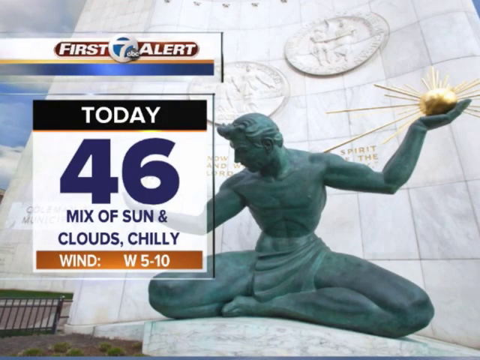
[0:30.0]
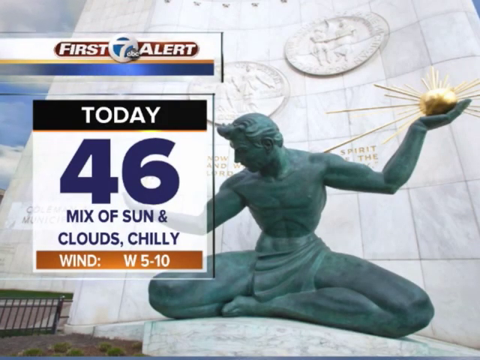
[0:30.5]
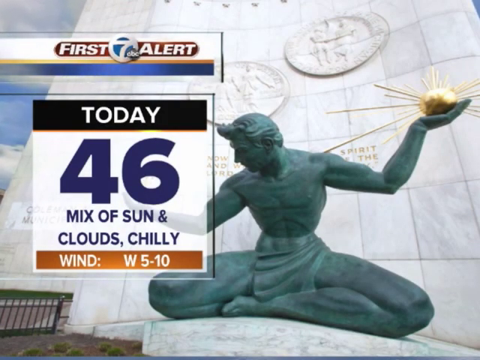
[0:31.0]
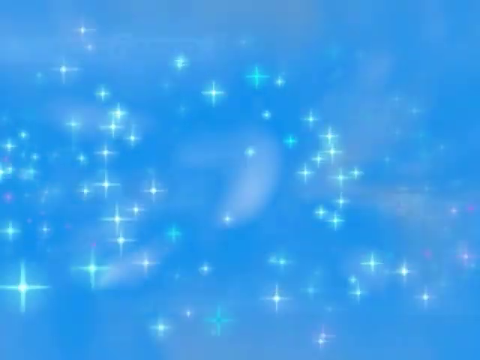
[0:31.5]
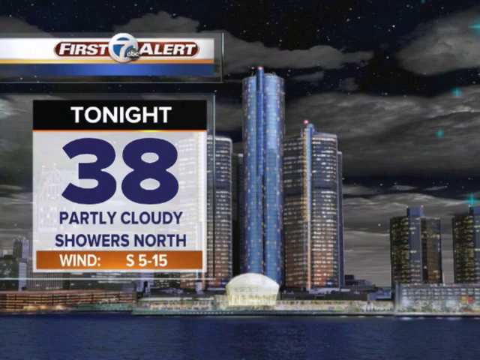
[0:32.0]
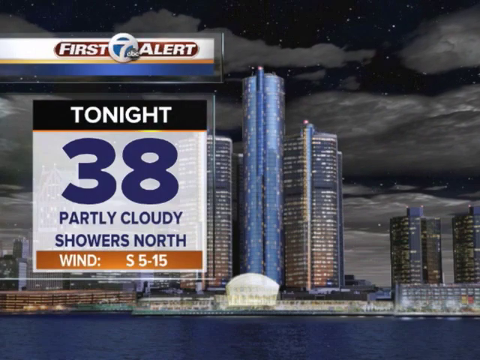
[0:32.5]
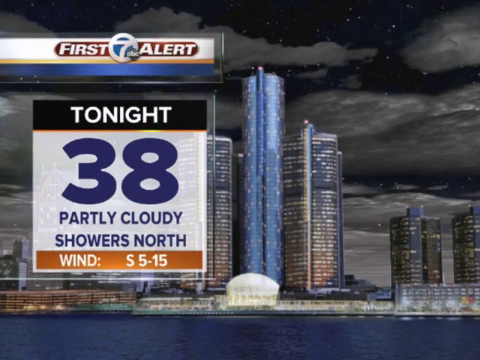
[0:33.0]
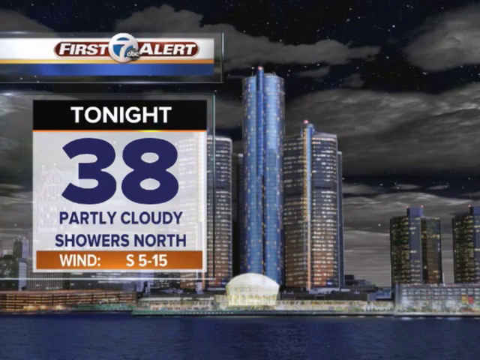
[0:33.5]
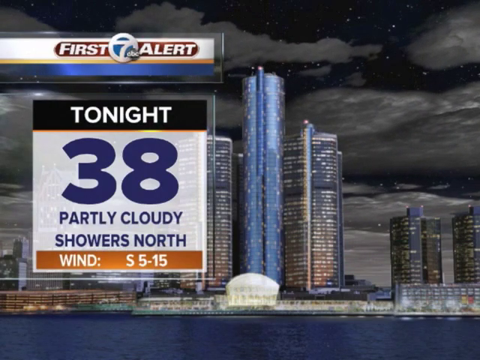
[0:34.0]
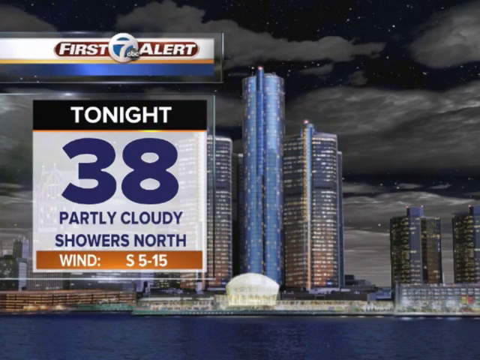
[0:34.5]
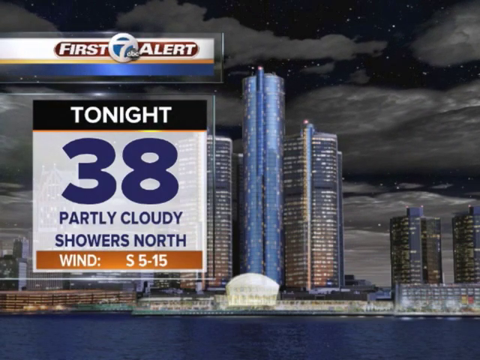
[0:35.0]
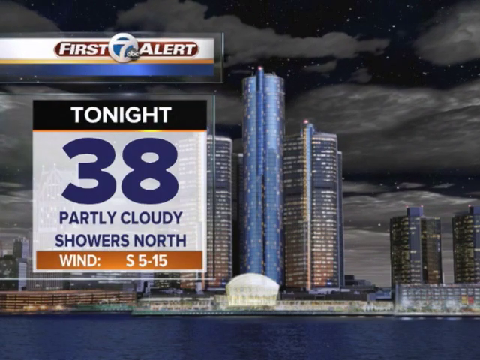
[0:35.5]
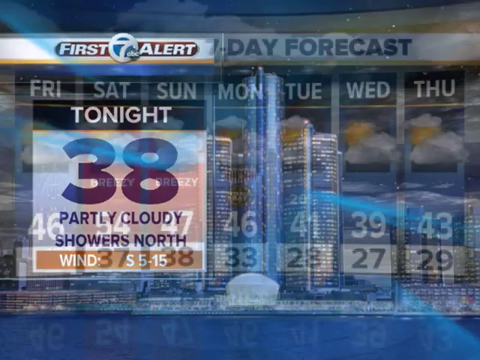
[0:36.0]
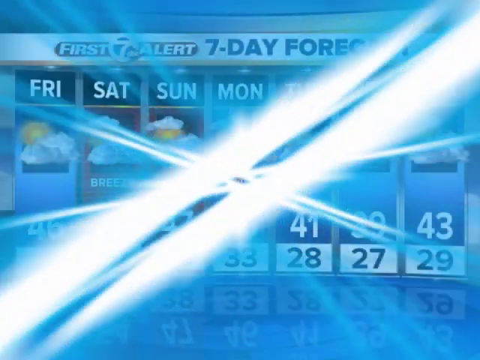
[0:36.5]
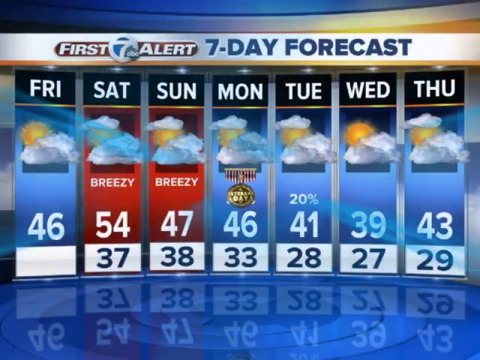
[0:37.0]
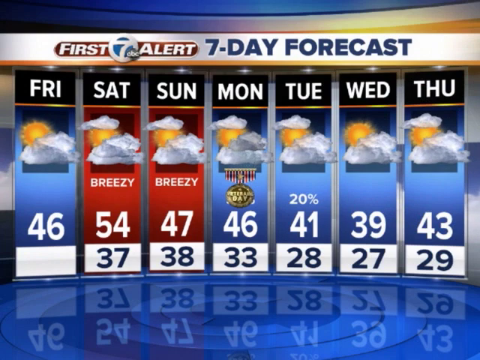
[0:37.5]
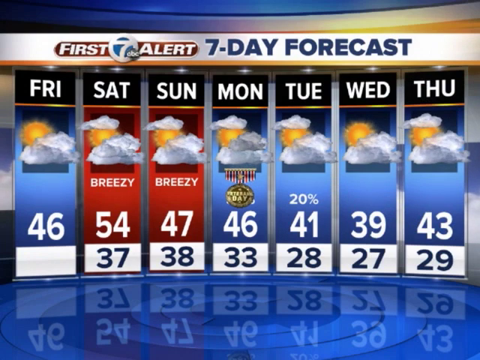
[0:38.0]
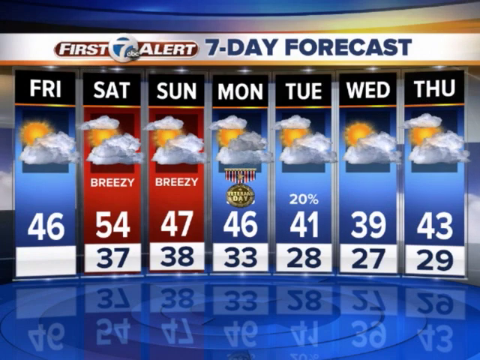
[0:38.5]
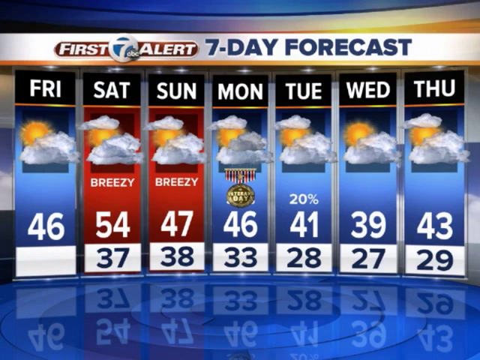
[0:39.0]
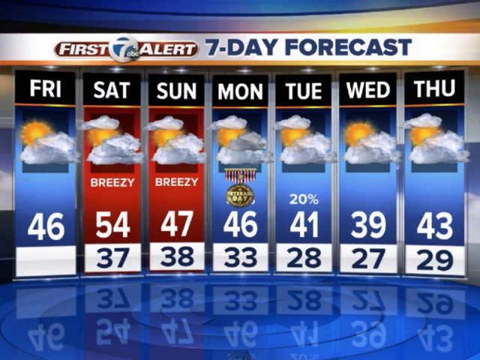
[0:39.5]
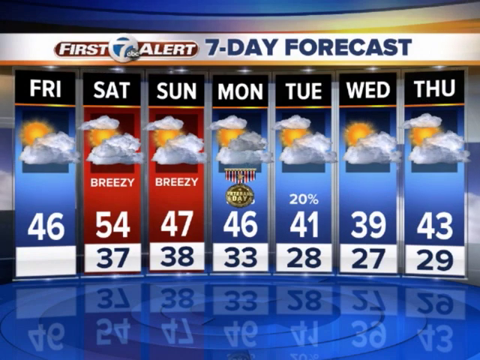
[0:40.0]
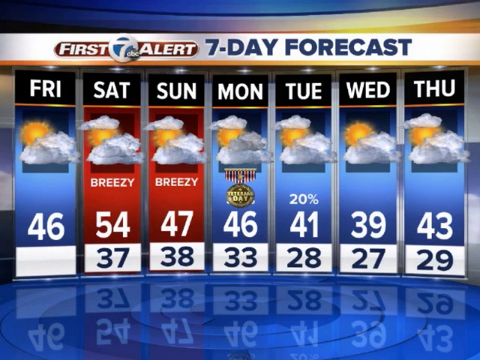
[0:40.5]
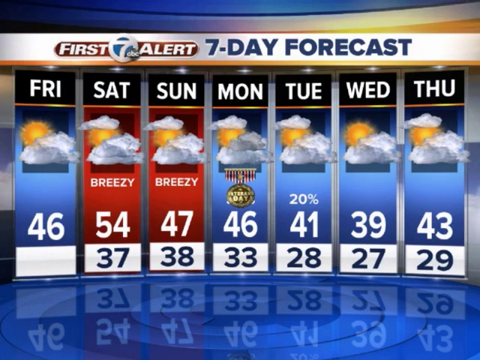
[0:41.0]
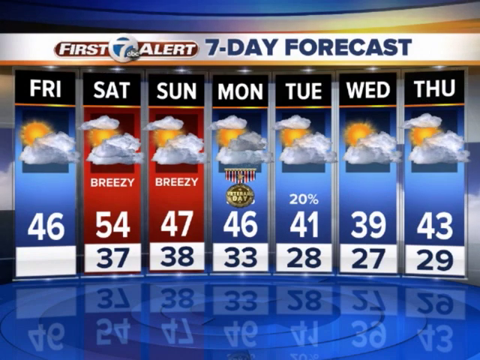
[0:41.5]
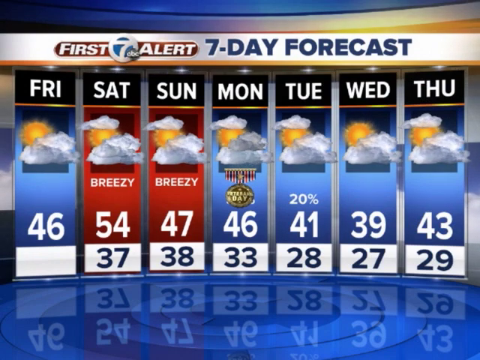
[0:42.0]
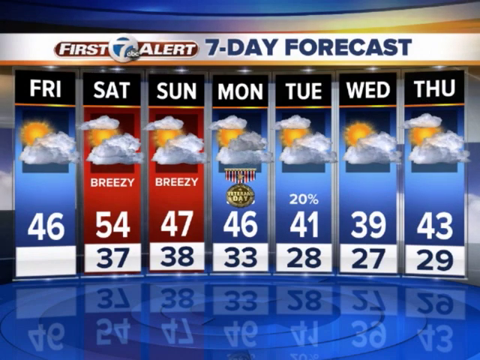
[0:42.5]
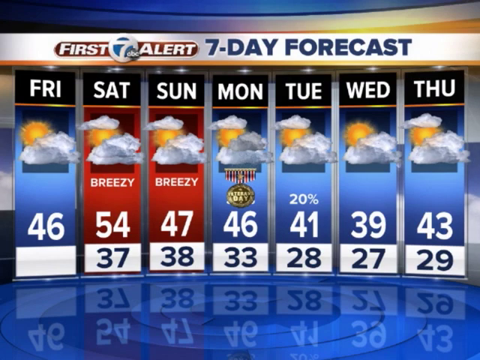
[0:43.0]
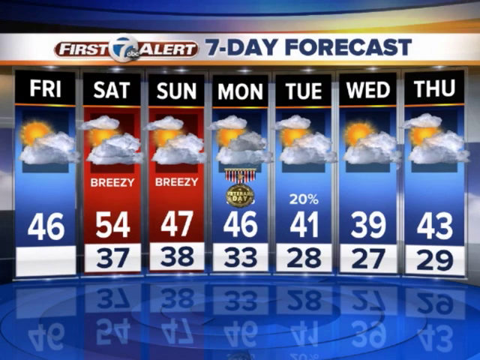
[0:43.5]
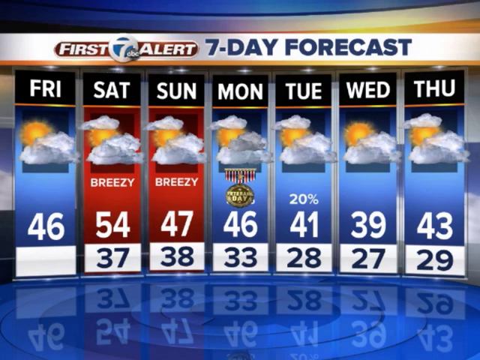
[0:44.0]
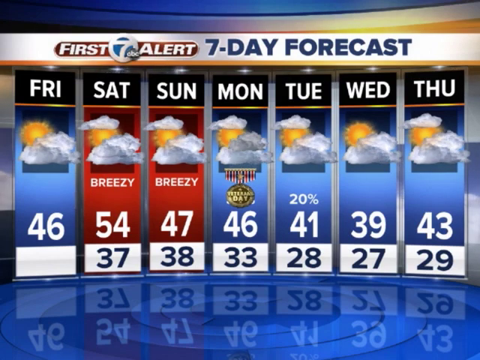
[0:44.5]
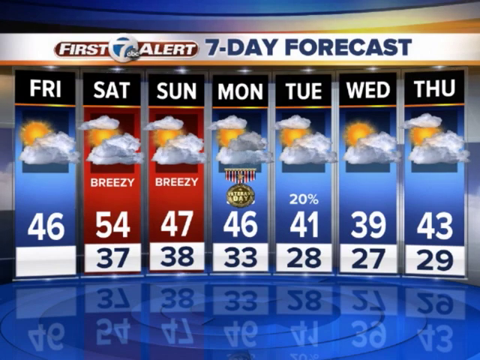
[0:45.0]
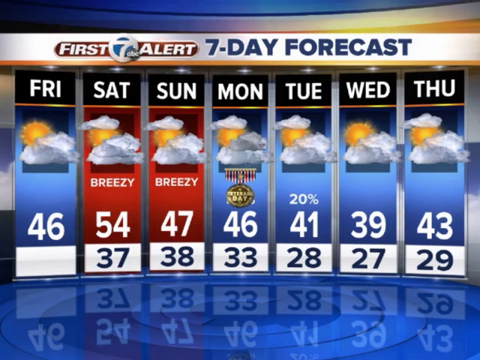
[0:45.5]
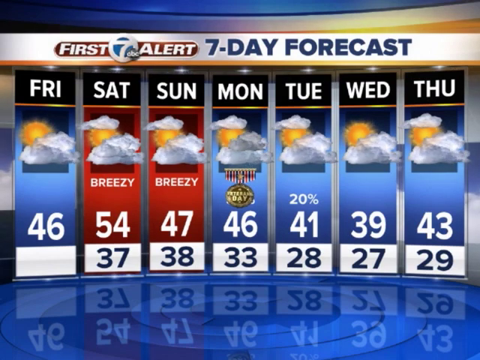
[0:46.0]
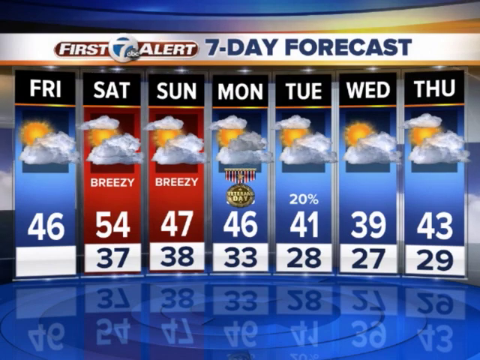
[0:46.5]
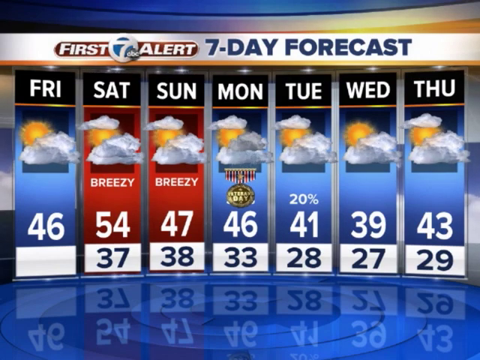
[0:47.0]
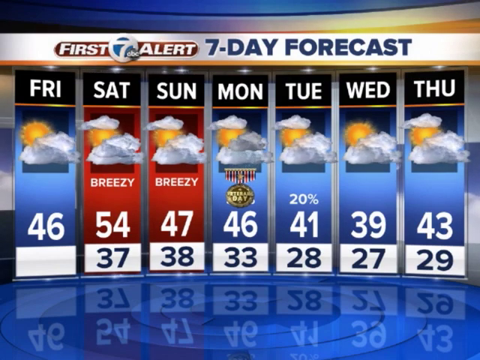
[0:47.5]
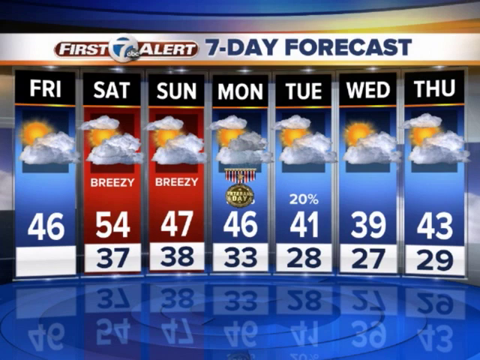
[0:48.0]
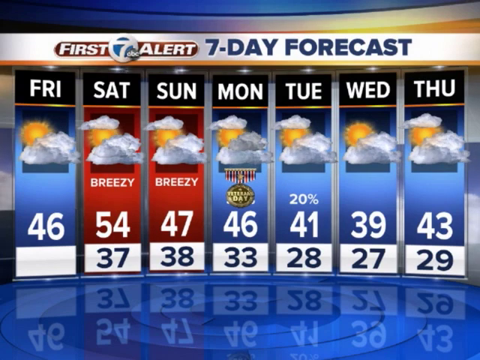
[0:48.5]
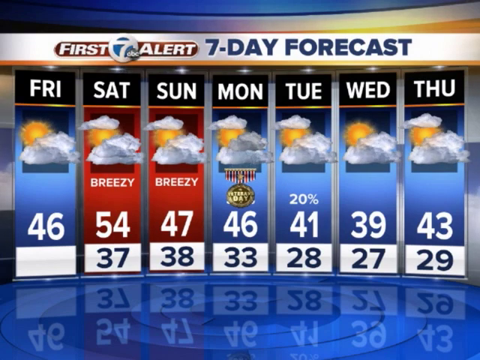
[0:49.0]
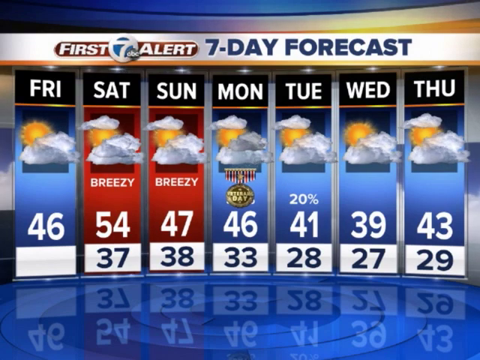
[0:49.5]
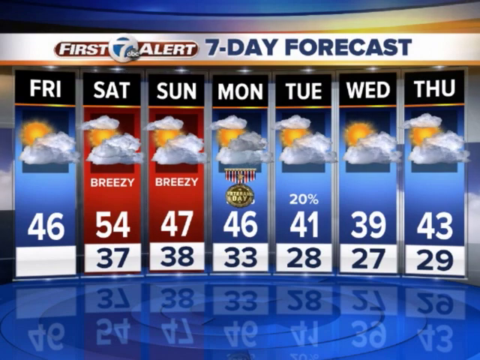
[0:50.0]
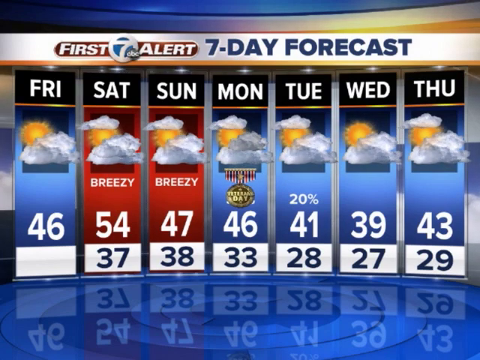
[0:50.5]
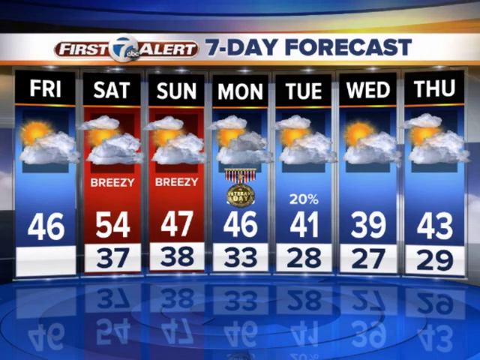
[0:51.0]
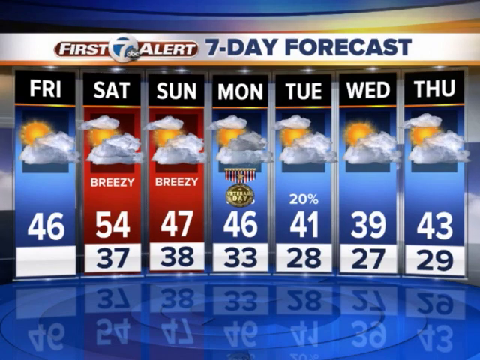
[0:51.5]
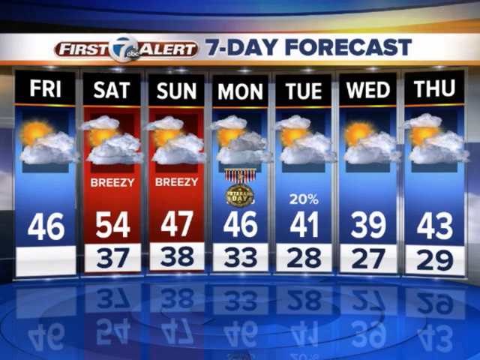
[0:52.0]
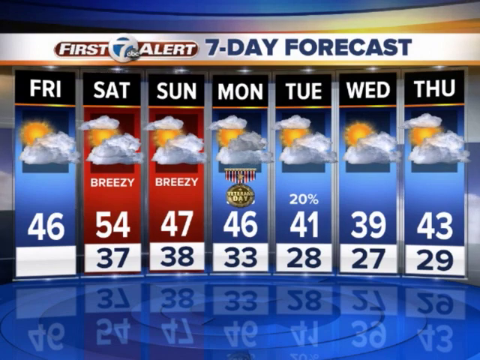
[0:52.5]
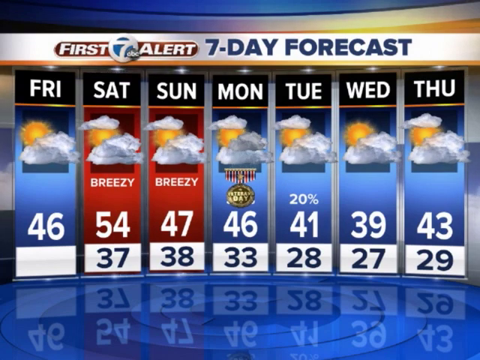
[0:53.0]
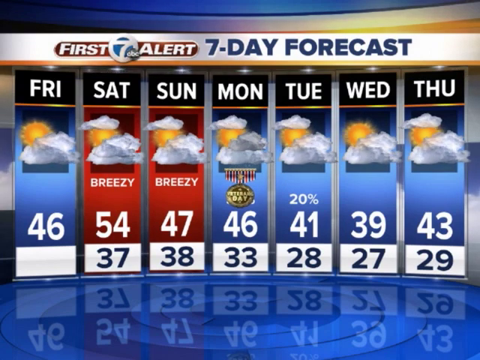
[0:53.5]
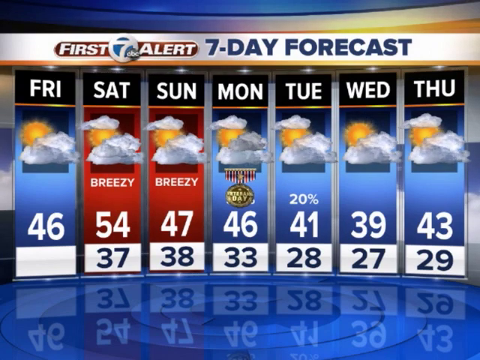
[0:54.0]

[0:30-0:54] Graphics of the expected seven-day forecast for the coming week appear in this webcast of First Seven Alerts on ABC. It starts by showing Monday with temperatures around 46 degrees Celsius and a bit of sun. Saturday and Sunday show some cloud cover and breezy conditions, with Saturday reaching a high of 54 and a low of 37, and Sunday a high of 47 and a low of 38. Monday, Veterans Day, shows cloud cover with a high of 46 and a low of 33. Tuesday shows continued cloud cover and a 20% chance of rain, with a high of 41 and a low of 28. Wednesday and Thursday show similar temperatures, with a high of 43 and a low of 29 degrees Celsius.